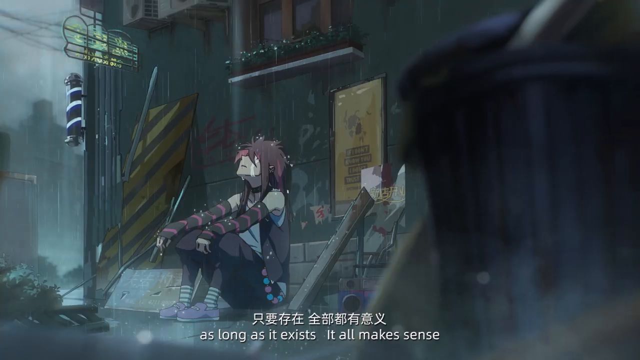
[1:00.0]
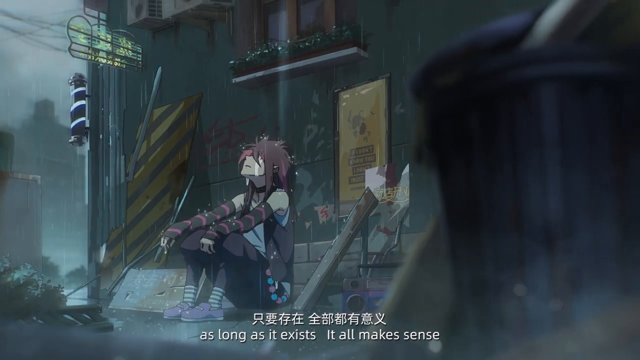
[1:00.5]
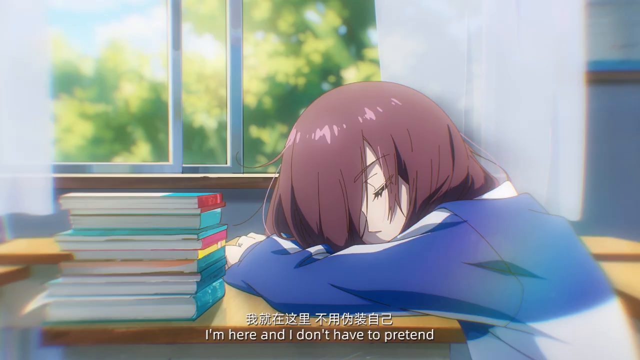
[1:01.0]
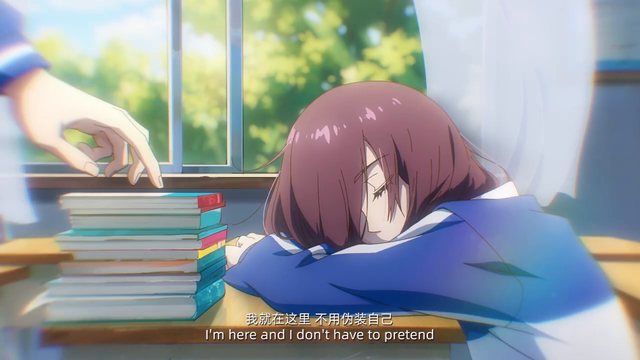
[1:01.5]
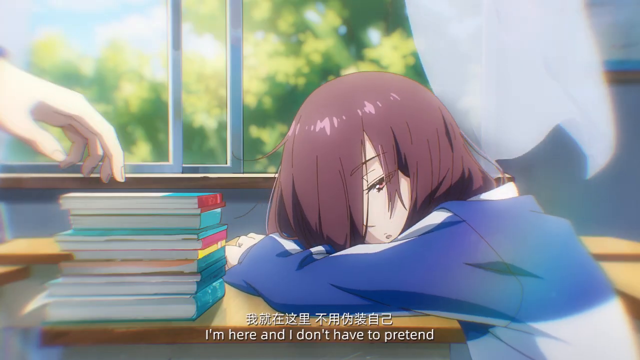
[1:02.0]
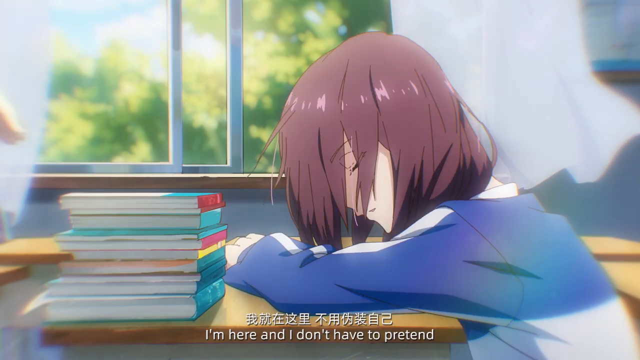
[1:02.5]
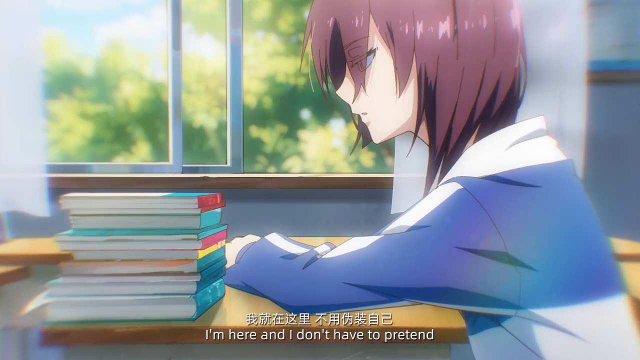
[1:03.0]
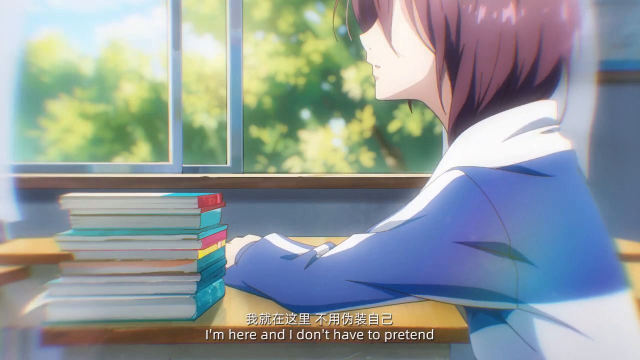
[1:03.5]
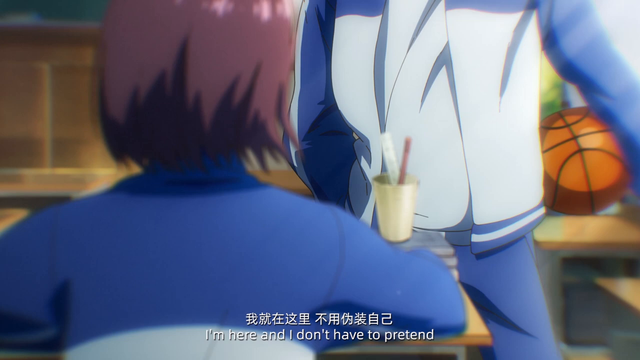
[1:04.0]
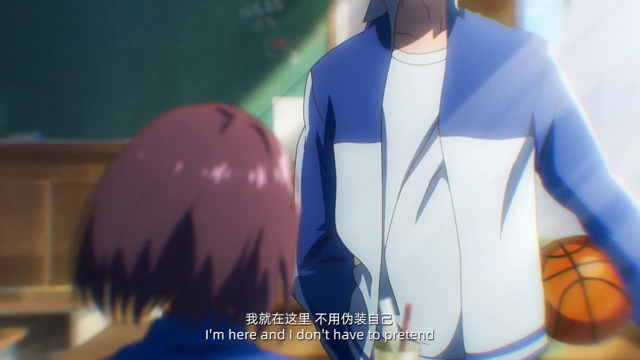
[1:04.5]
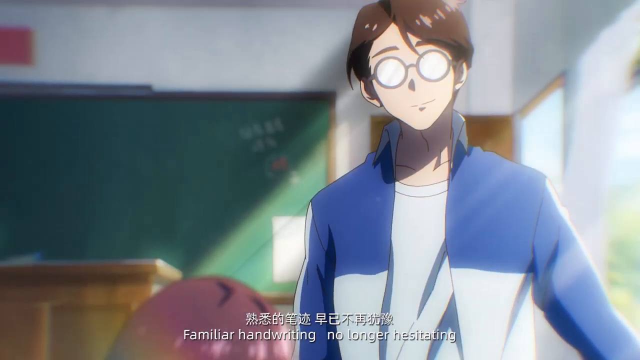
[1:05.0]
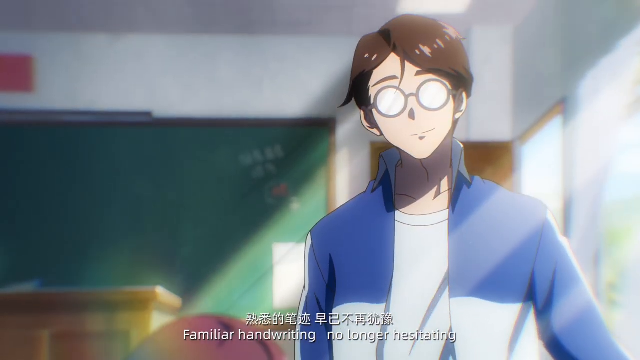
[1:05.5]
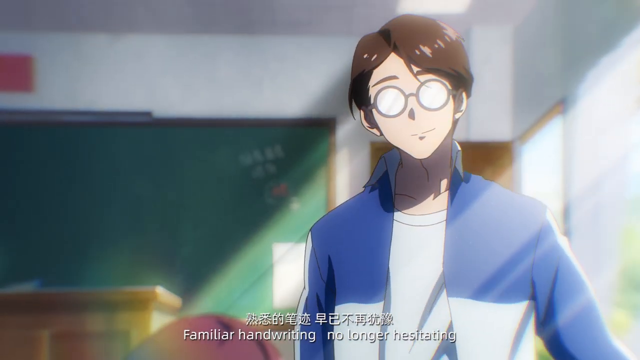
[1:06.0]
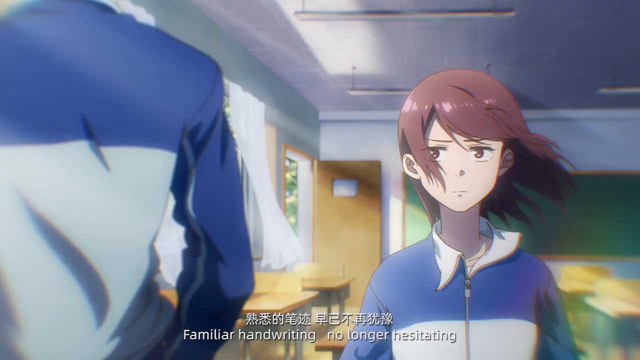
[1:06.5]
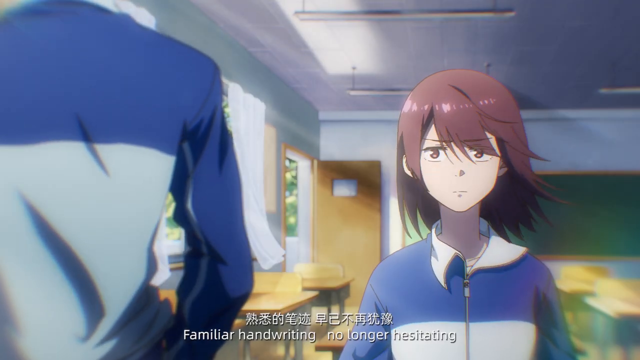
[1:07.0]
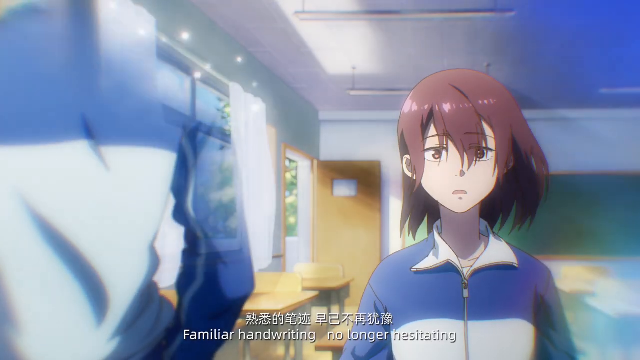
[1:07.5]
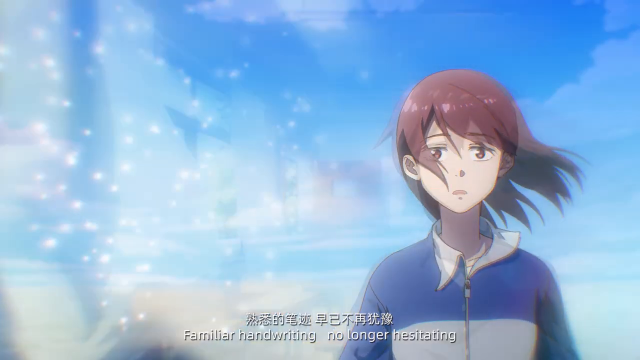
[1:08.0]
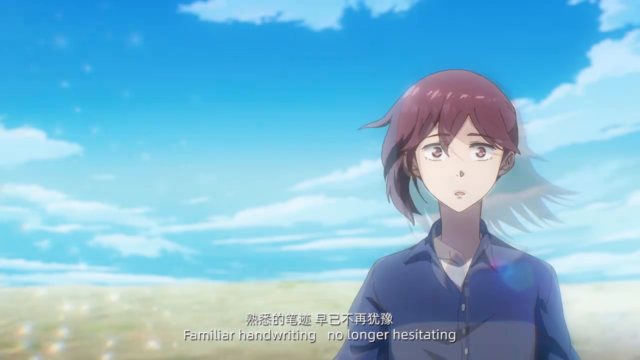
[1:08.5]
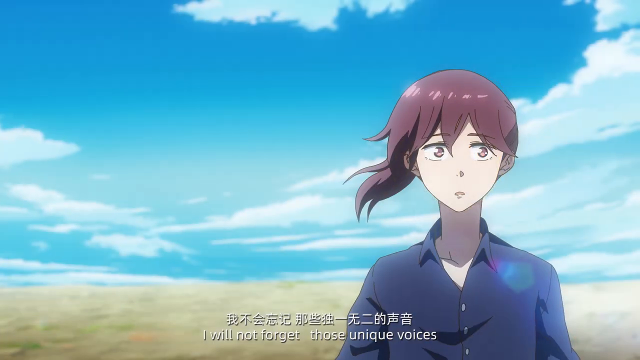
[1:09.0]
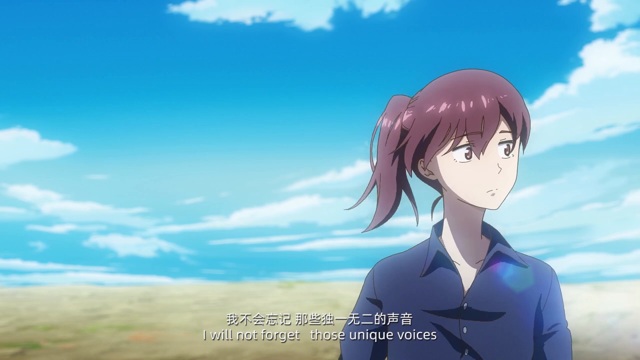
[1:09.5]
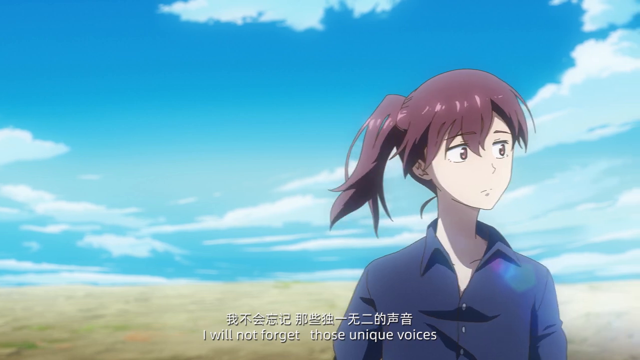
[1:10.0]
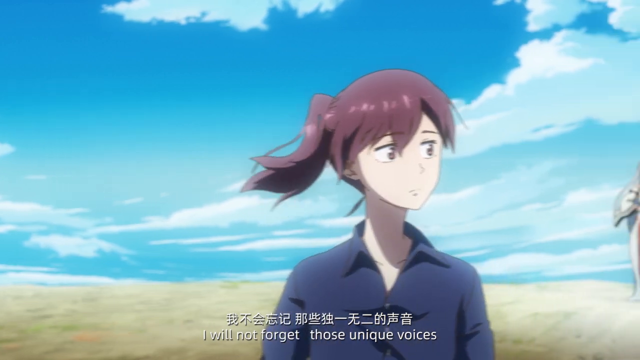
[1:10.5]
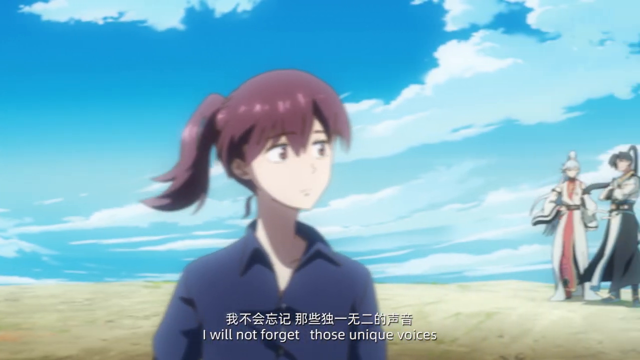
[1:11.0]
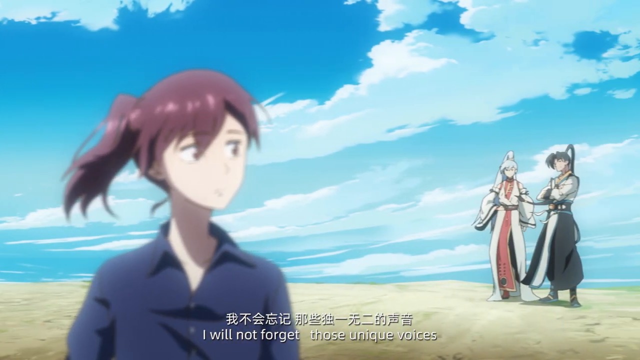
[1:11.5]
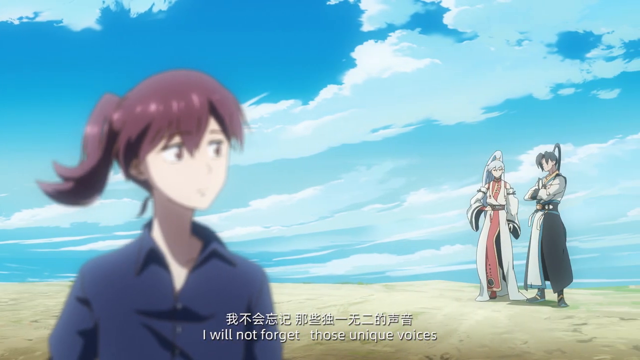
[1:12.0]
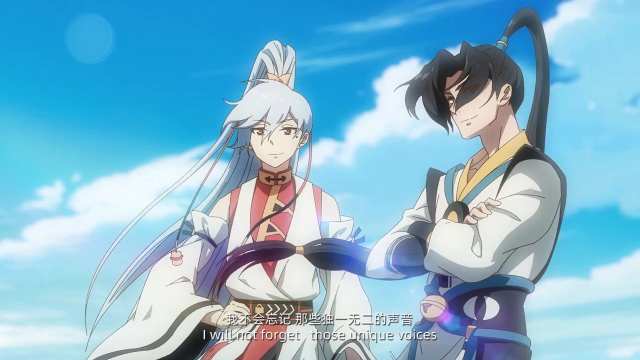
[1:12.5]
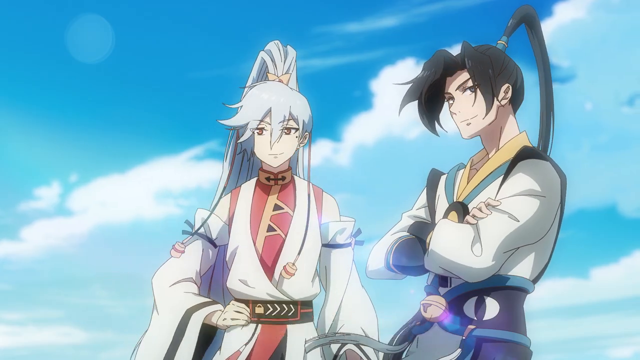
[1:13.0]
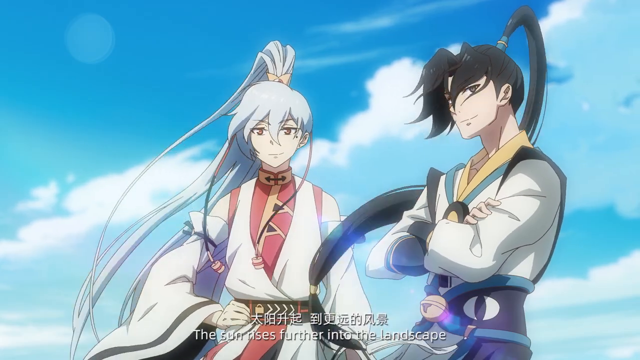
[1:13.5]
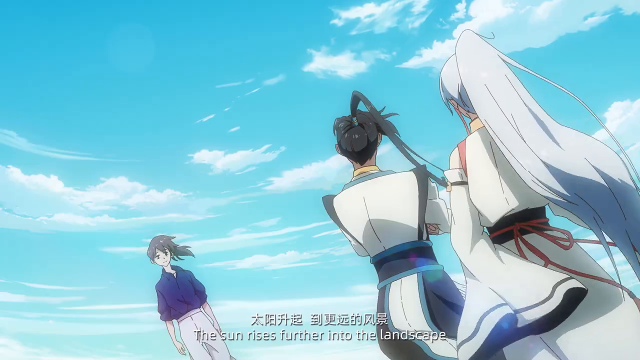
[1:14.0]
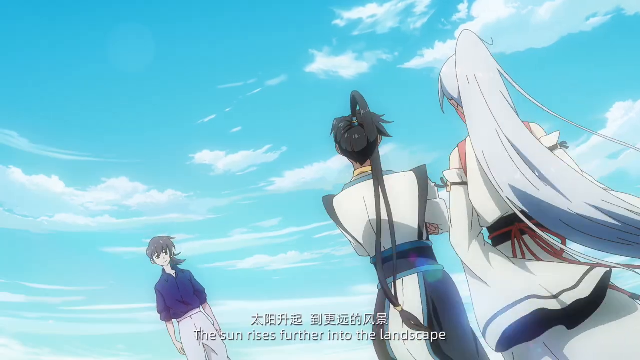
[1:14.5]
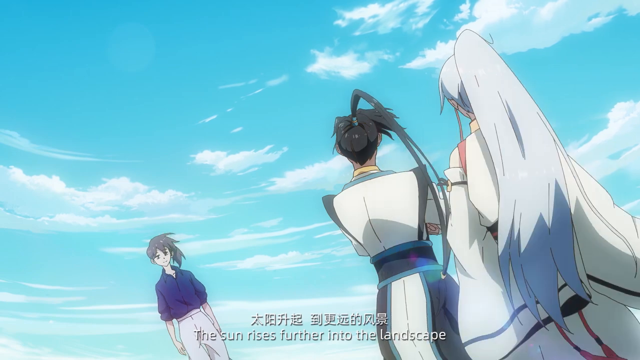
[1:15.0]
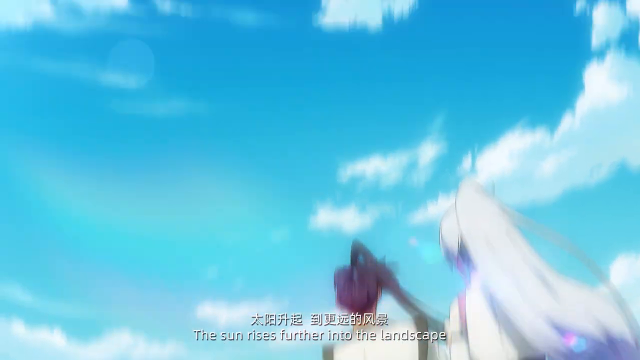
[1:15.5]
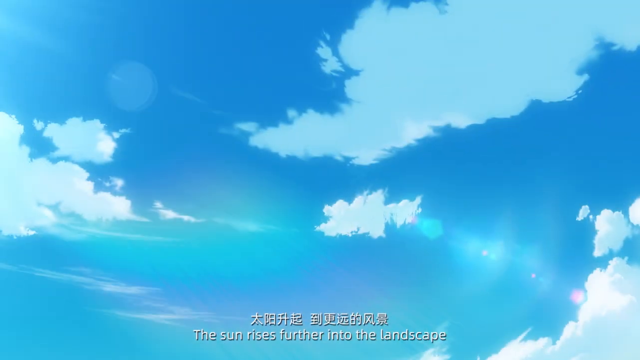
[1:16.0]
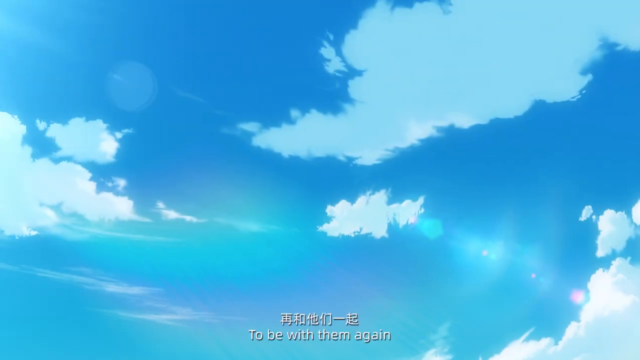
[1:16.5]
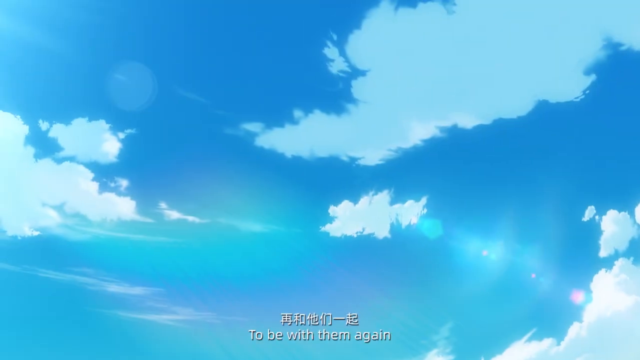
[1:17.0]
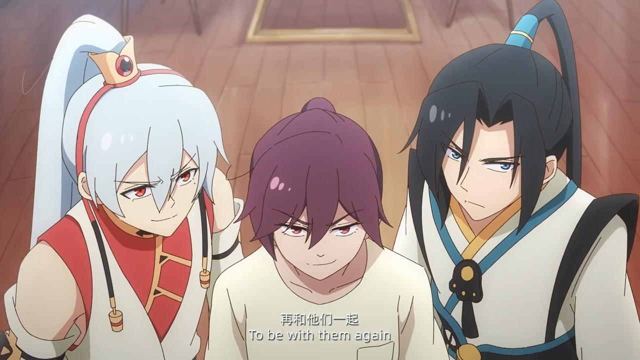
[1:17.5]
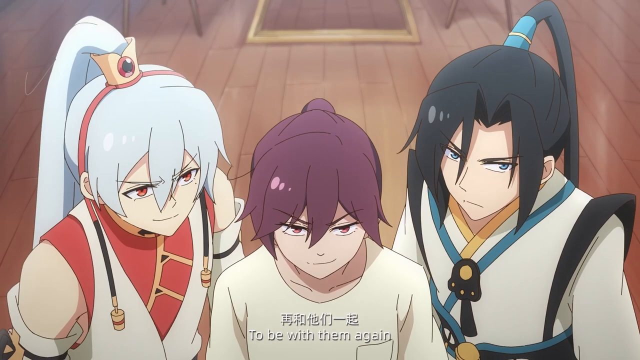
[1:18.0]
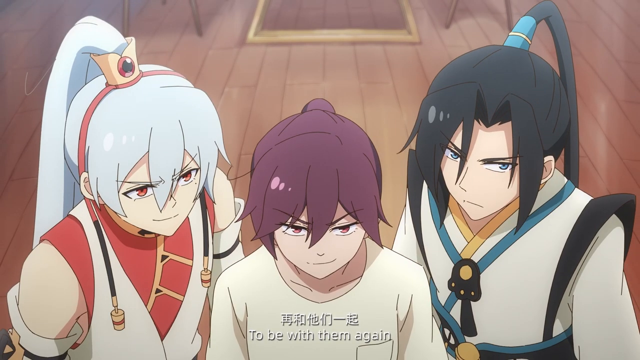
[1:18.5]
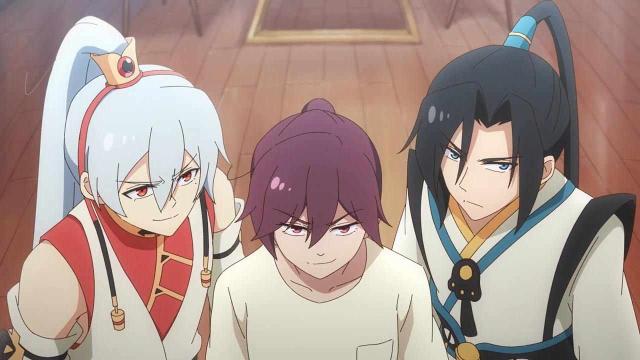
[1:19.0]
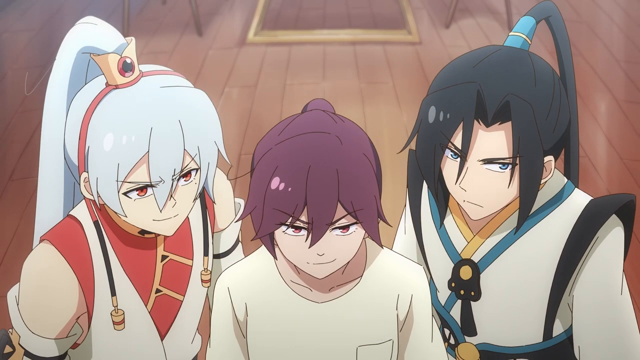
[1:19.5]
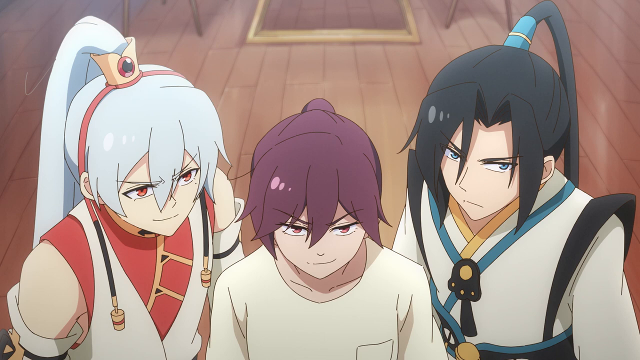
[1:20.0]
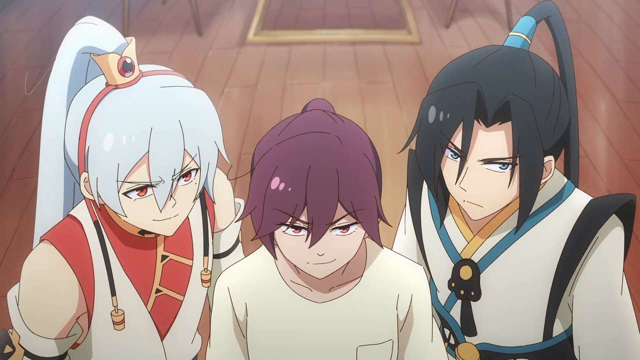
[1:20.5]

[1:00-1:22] Several scenes with anime characters flash by, with occasional subtitles at the bottom, in what appears to be an anime opening. A person sits in the rain in a somewhat dark and gloomy city with garbage cans on the side, crouched down in what looks like a sad position. A schoolgirl with brown hair in a blue uniform has a stack of books in front of her, completely aligned on the right; someone's hand taps on the books and wakes her up. There is an open window with the curtains blowing a little. The camera position changes to show the person who tapped the books: a boy in a blue school uniform with glasses glinting in the light and a chalkboard behind him. The view swaps to the girl looking on, confused. The background then disappears into particles, leaving a blue sky with clouds behind her and two people standing in the distance. The view zooms in on them: they appear to be a woman and a man, both with long hair in a ponytail on top that extends behind them and blows in the wind. The camera looks up to the sky, and then the three characters, the girl and the two from the background, are shown indoors with a wooden floor behind them.